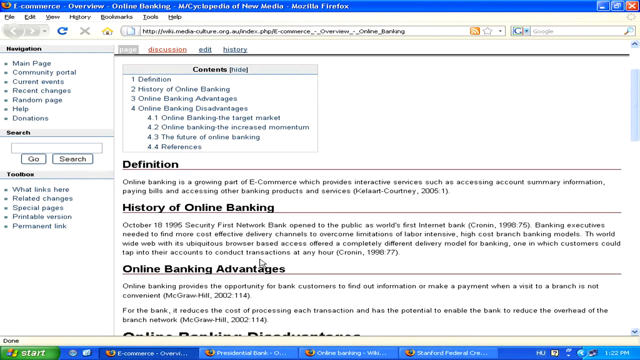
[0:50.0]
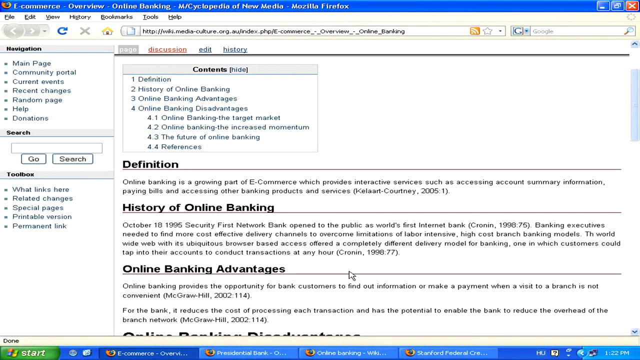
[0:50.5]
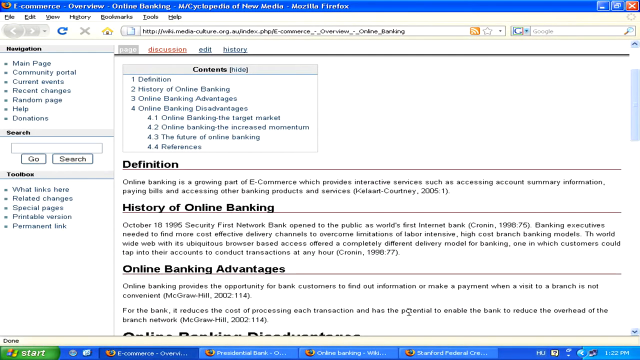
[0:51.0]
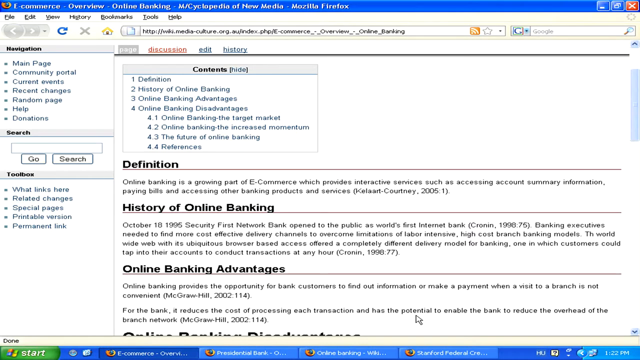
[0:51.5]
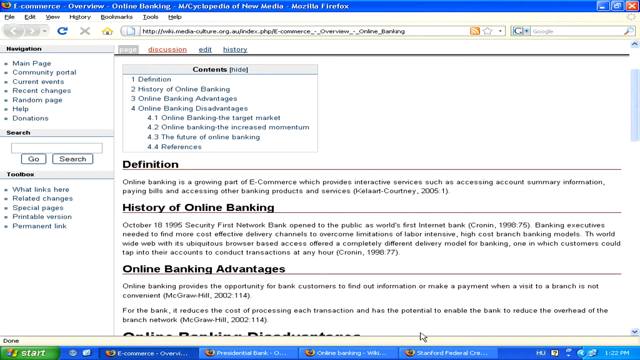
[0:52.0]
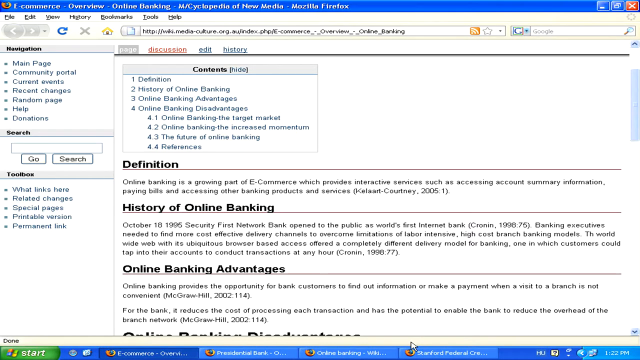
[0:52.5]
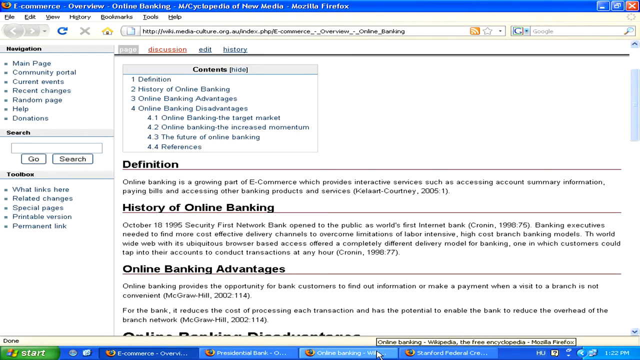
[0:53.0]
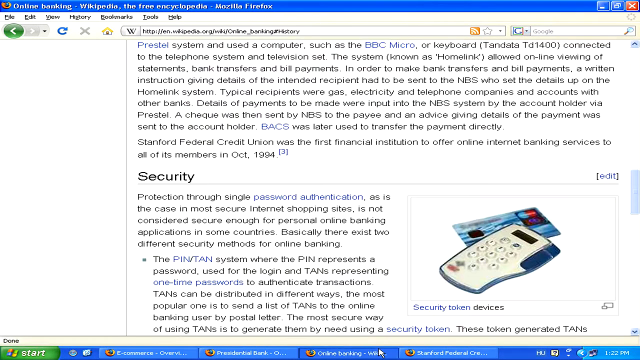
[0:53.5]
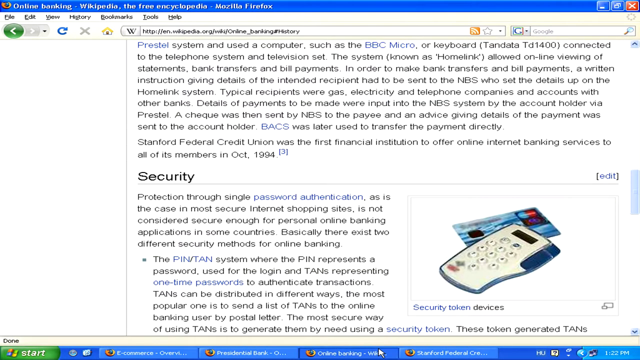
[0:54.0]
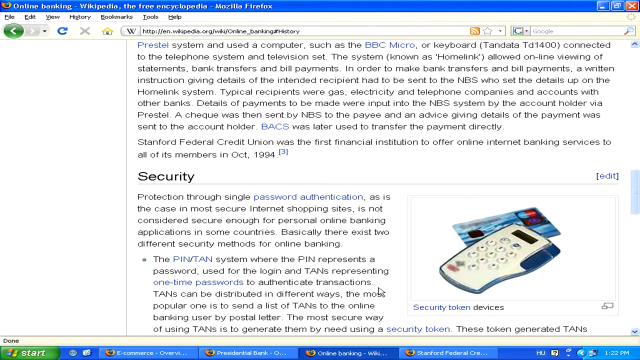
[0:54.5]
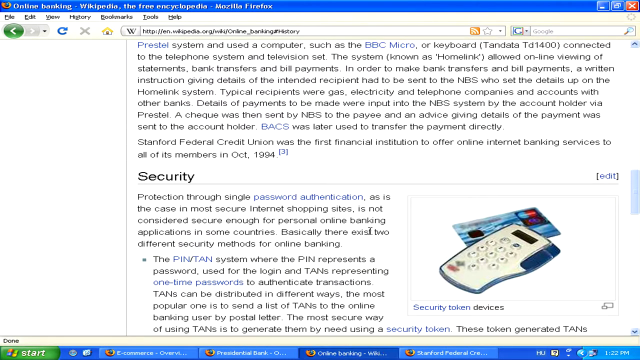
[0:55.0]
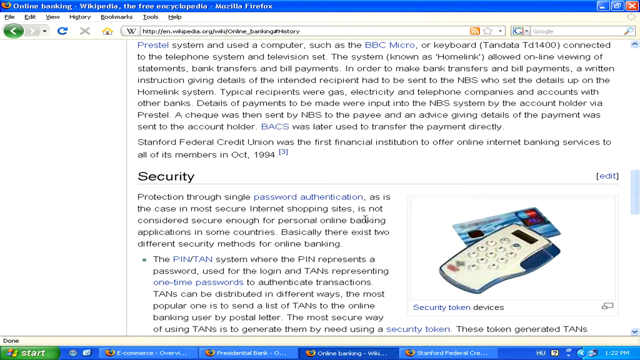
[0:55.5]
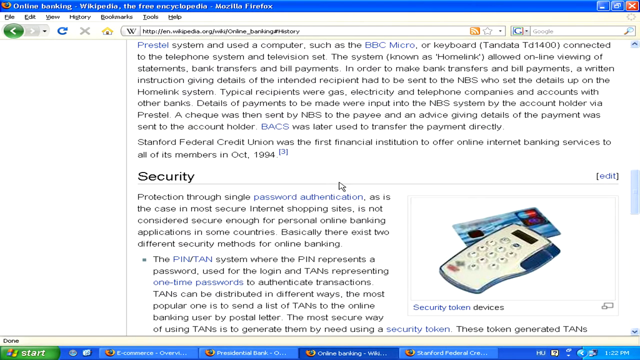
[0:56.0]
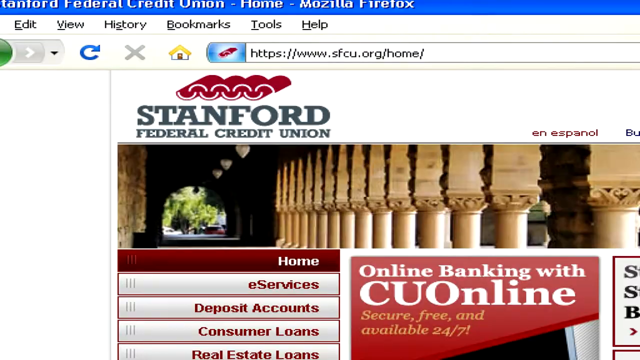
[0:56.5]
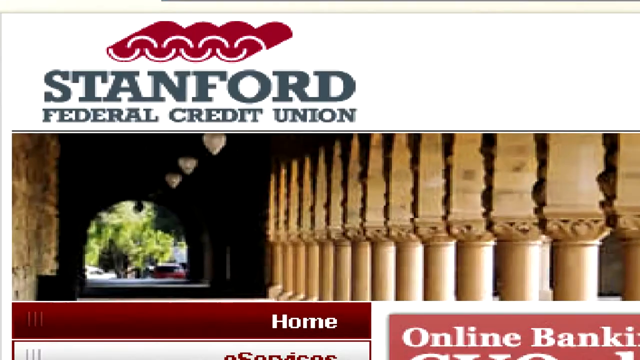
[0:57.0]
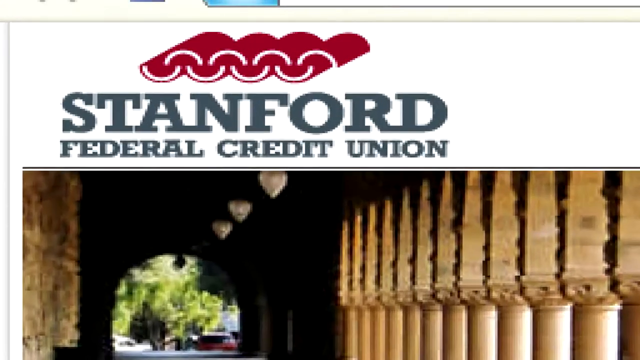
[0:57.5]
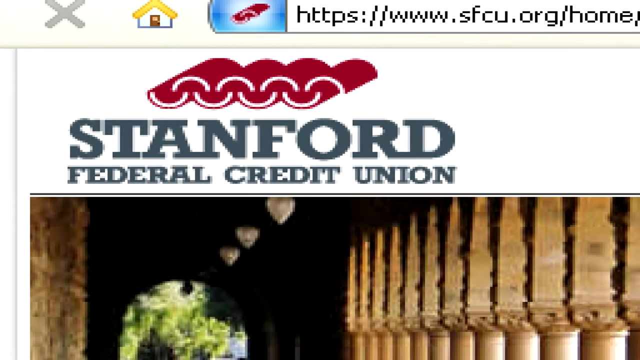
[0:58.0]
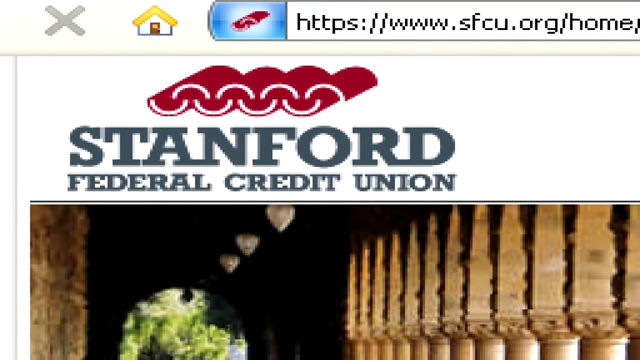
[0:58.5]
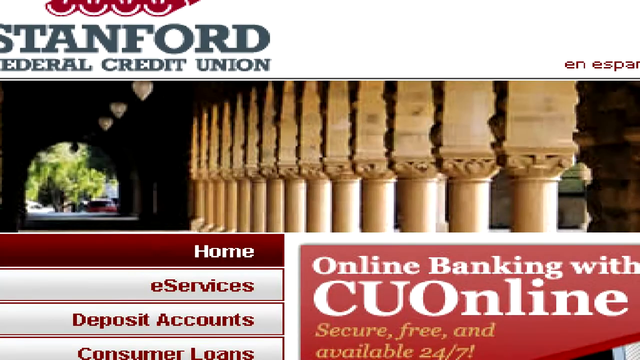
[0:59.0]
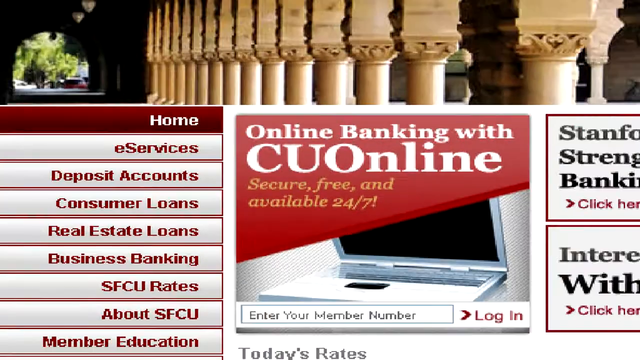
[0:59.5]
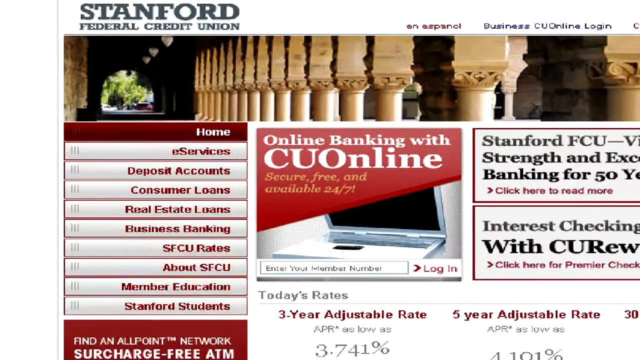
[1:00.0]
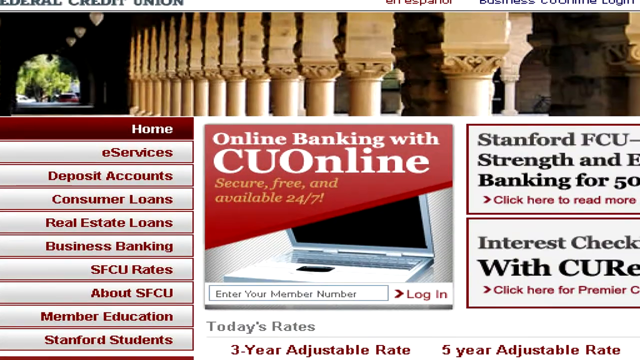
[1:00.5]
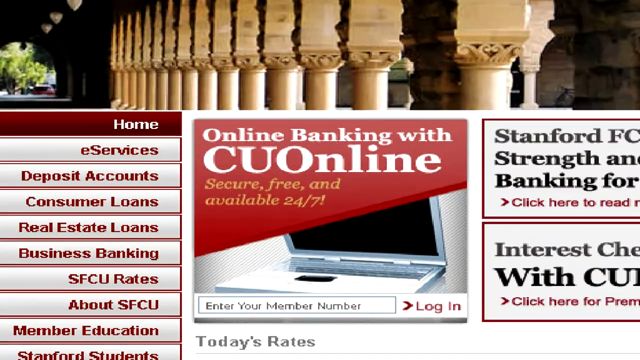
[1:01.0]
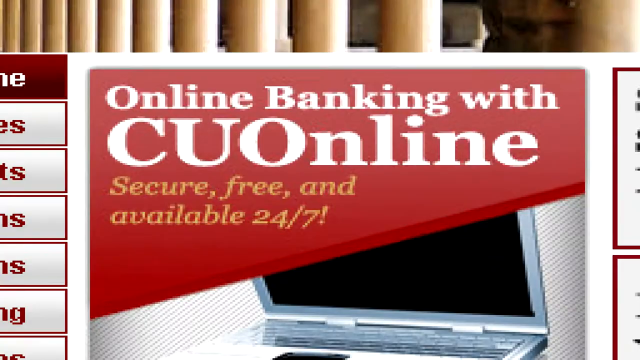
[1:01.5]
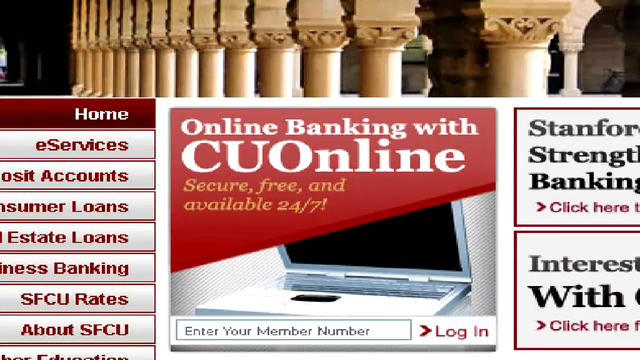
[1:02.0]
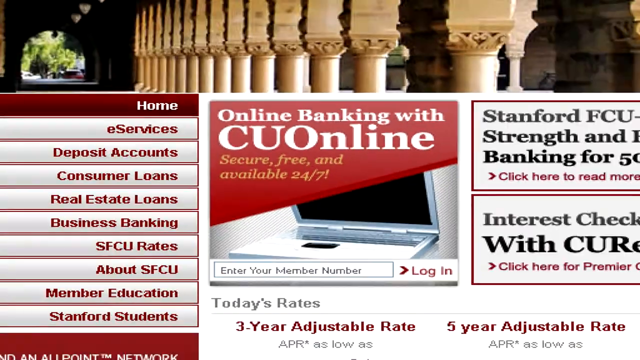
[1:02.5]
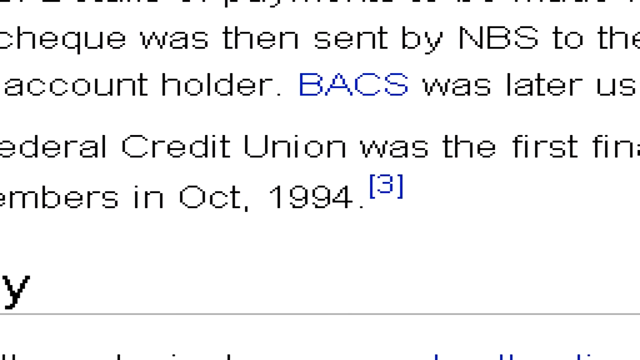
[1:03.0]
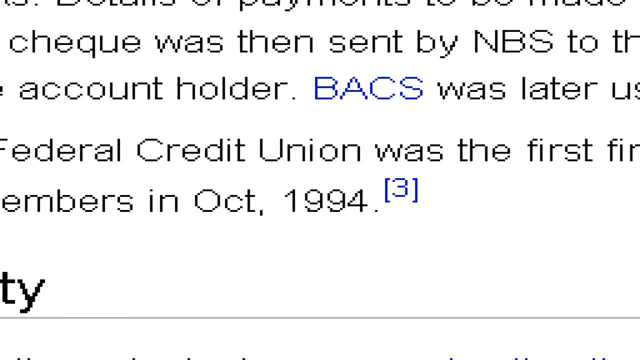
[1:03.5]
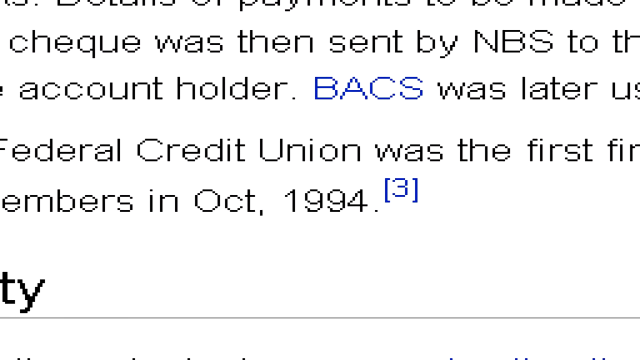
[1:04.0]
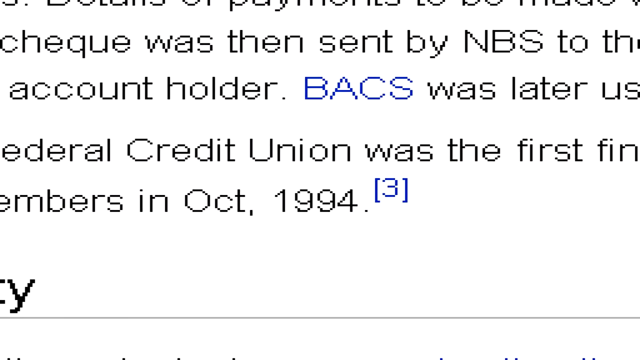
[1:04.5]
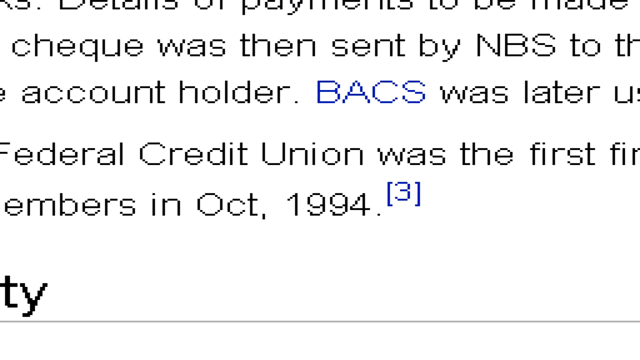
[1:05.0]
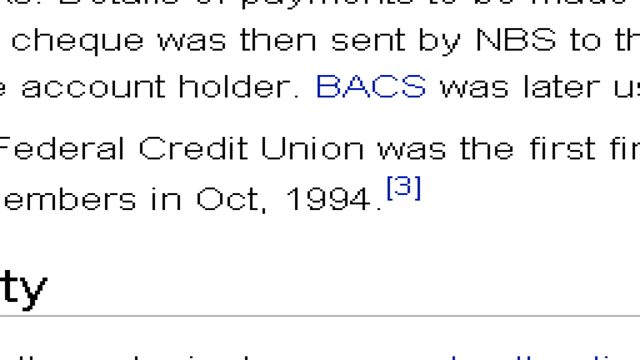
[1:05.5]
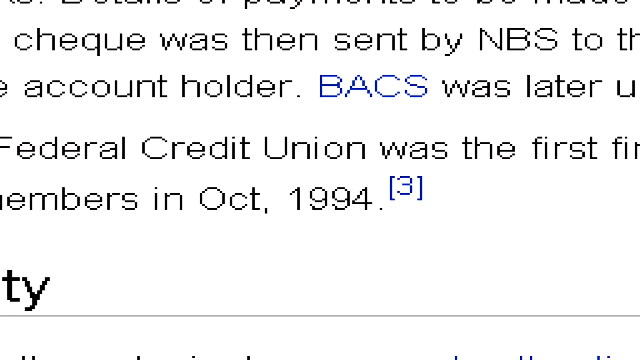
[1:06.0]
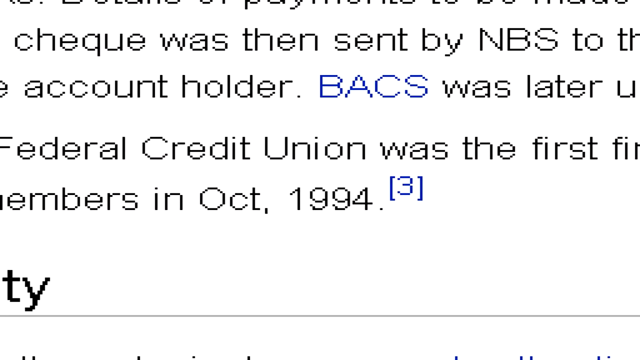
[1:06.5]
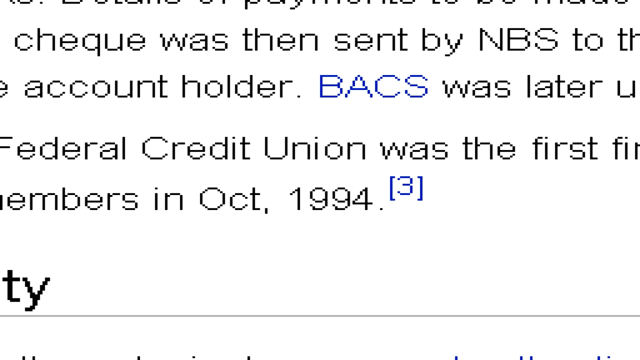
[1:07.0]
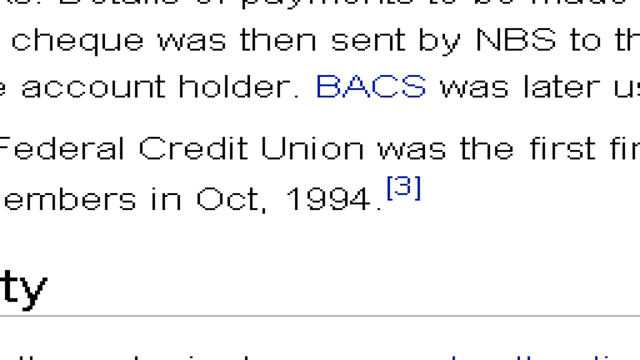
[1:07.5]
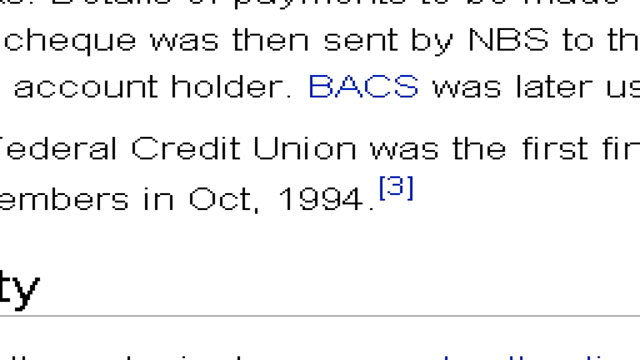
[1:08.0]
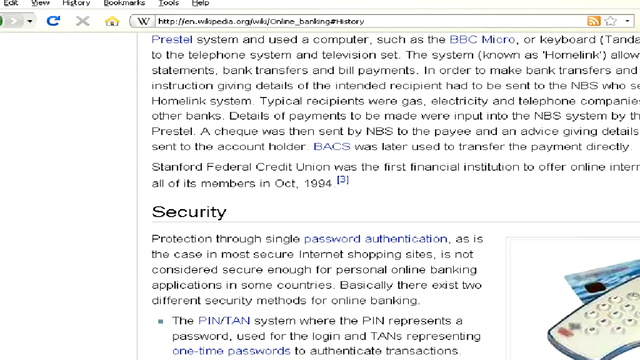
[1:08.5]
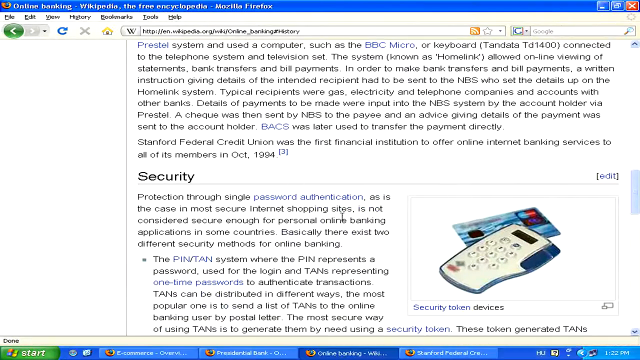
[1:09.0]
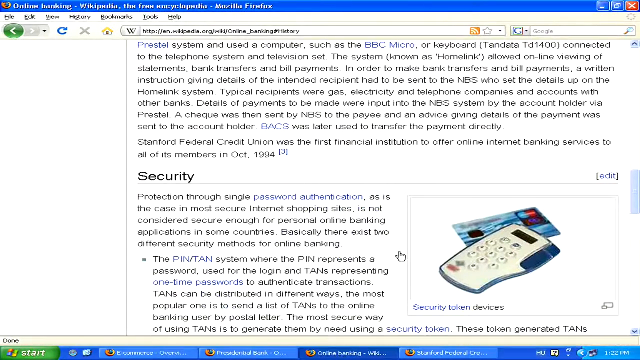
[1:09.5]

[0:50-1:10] More information on online banking is shown on a Wikipedia page that has been pulled up. The video then goes to Stanford Federal Credit Union, another online bank. The view is zoomed in quite far at first, and after it zooms out more of the page is visible. The page says that Stanford Federal Credit Union was the first financial institution to offer online banking.